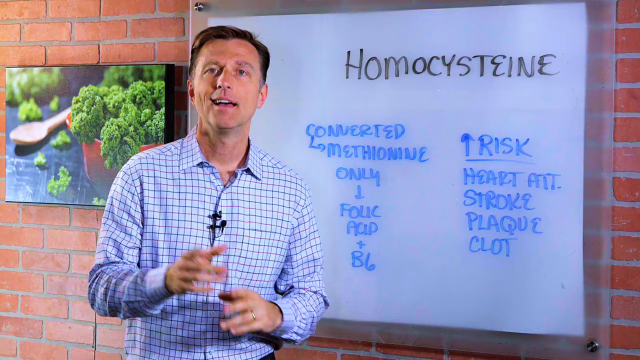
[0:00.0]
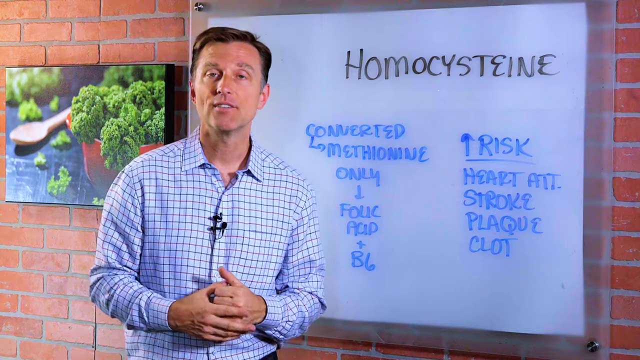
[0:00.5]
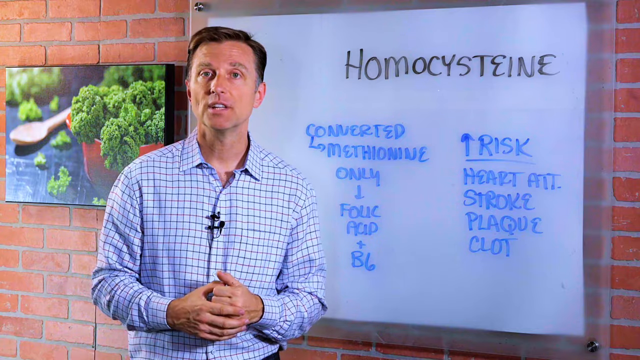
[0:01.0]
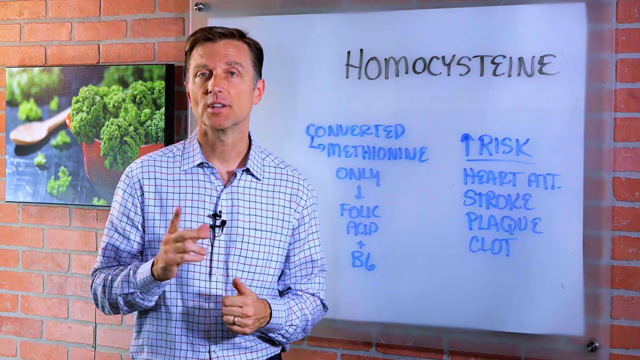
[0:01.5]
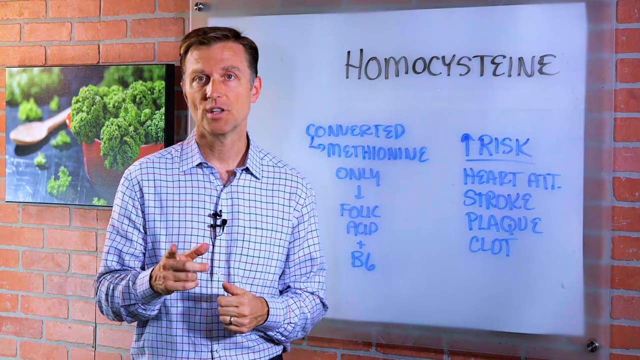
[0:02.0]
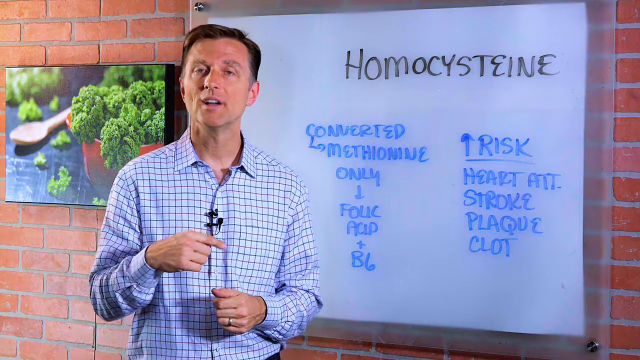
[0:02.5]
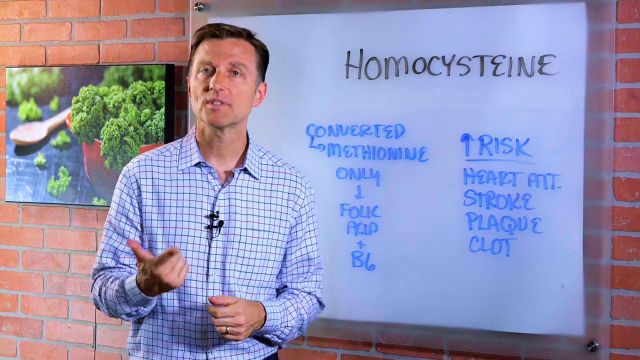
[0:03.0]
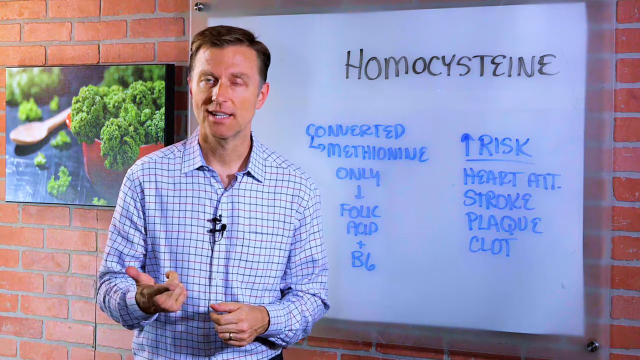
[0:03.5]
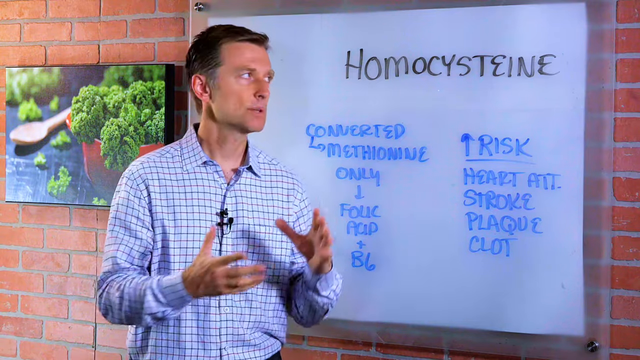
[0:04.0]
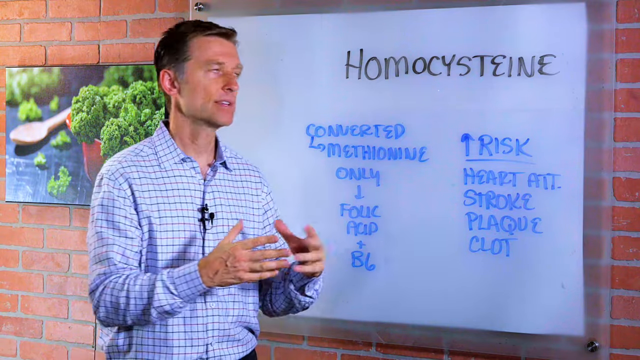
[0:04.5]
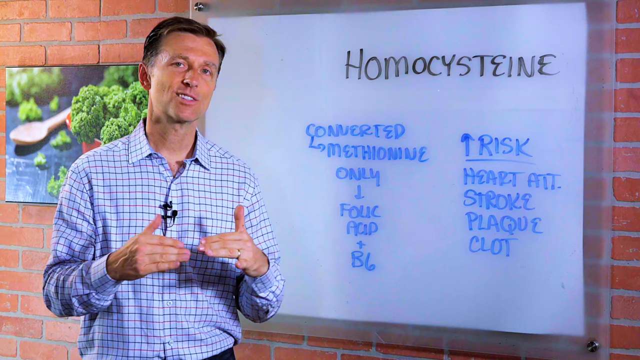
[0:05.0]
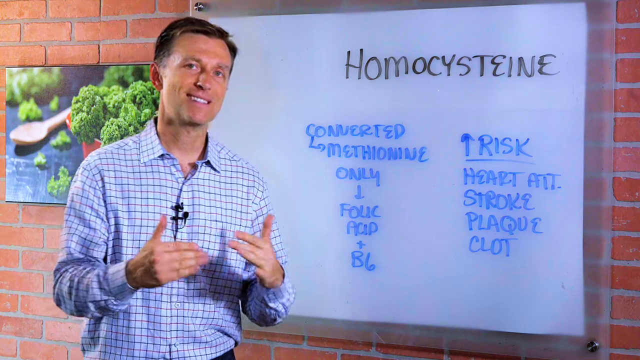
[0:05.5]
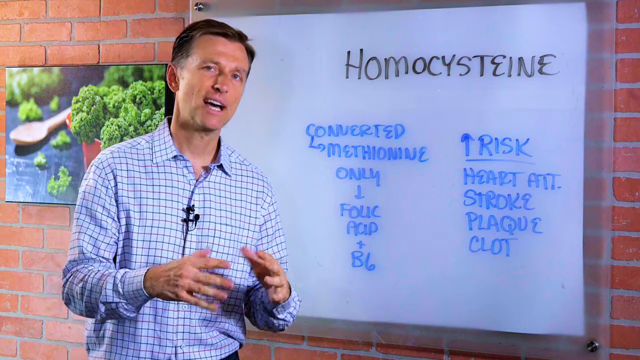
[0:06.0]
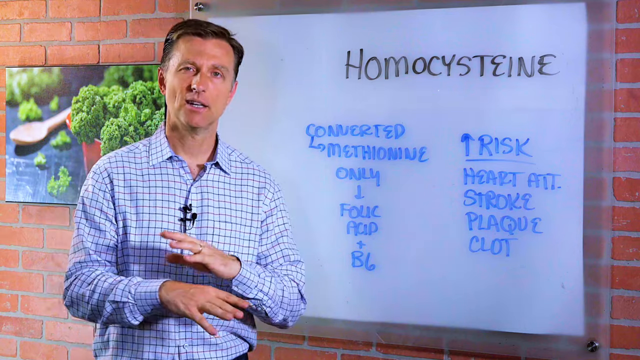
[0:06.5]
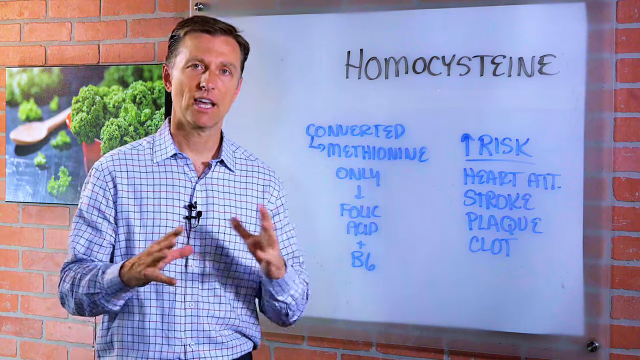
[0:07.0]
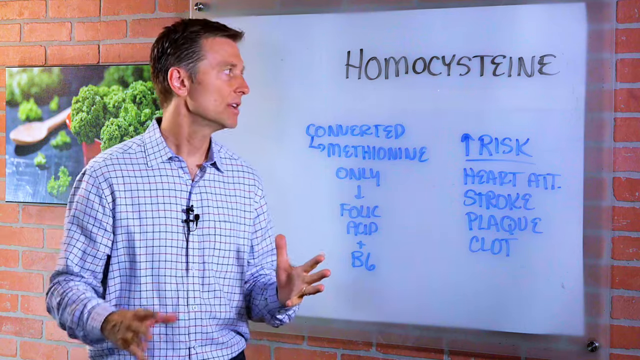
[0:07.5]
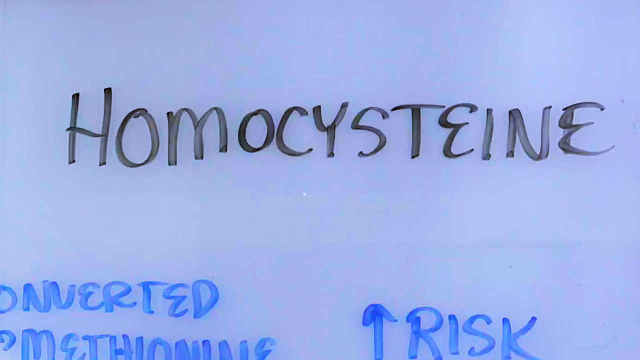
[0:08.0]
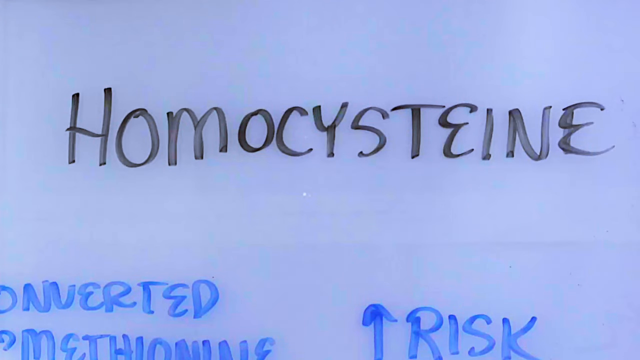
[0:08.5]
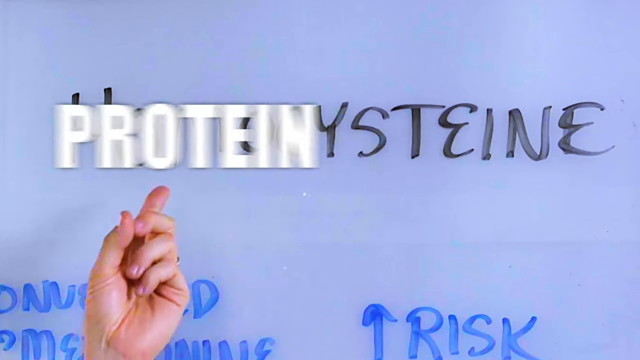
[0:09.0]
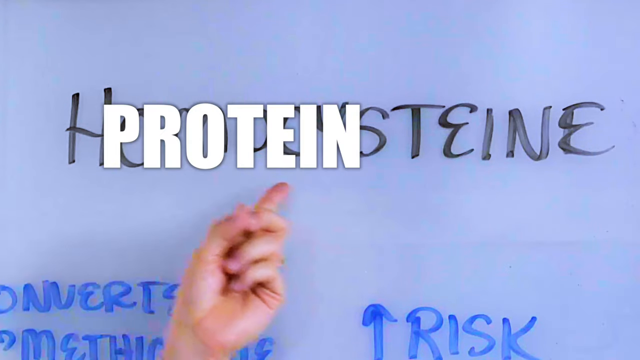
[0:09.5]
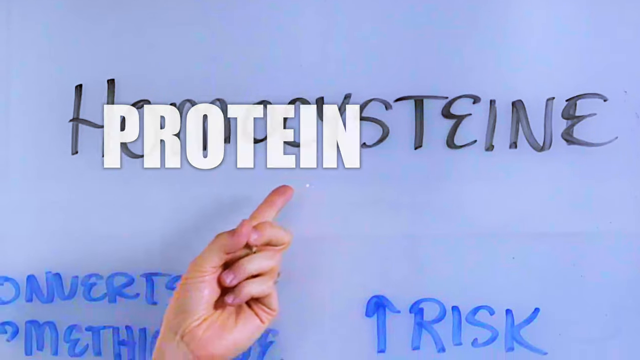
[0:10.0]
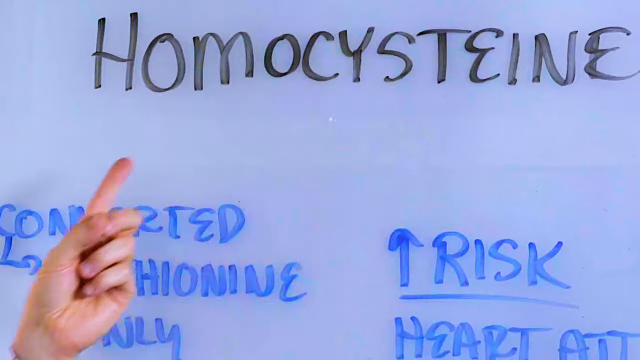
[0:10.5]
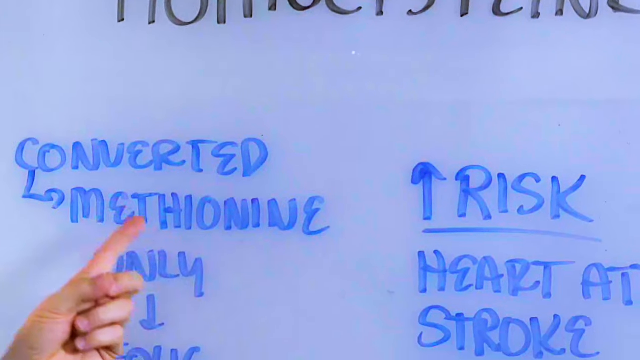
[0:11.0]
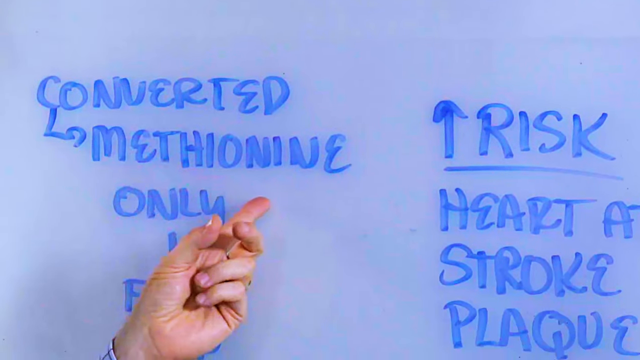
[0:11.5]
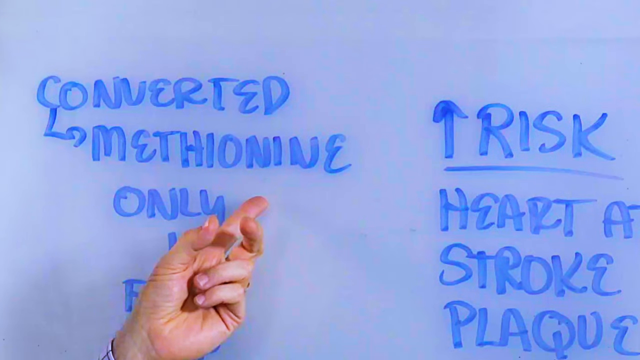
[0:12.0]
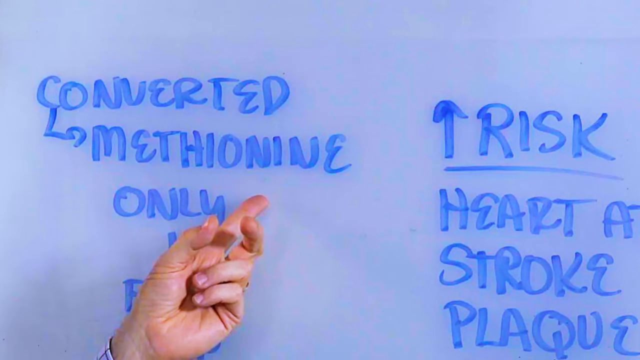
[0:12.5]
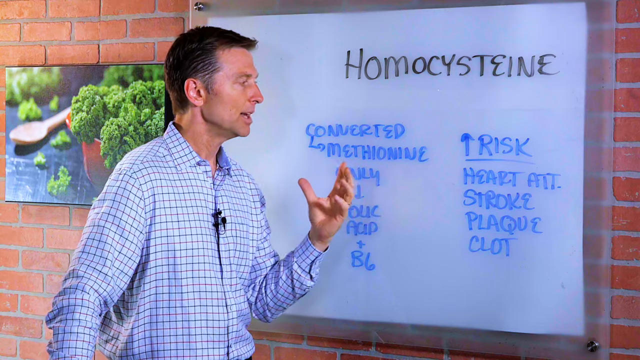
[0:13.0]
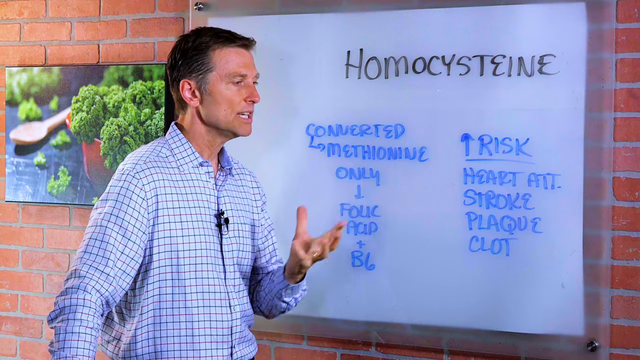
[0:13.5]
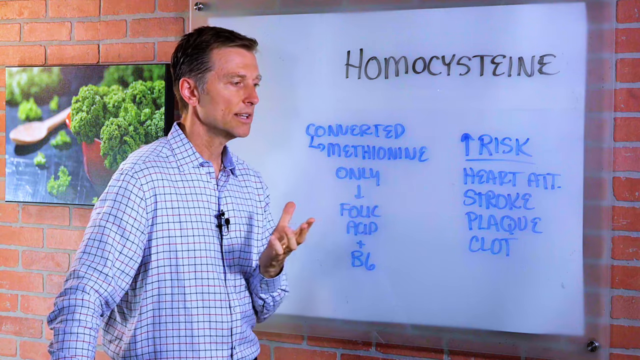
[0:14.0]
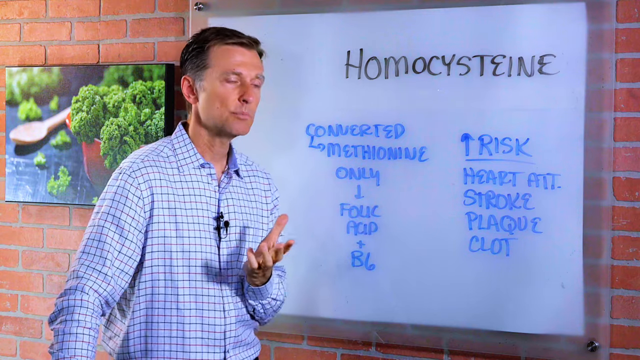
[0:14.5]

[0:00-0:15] The video begins with the title "What is homocysteine" displayed on the screen. A man with brown hair and a blue collared shirt stands in front of a whiteboard. The word "homocysteine" is written at the top of the whiteboard, with several related terms listed below it in blue text, such as "converted," "risk," "methionine only," "folic acid," "B6," "heart attack," "stroke," "plaque," and "clot." The man appears to begin explaining, looking towards the whiteboard. The camera cuts to a graphic with the word "protein" displayed. The man then points to the word "methionine" on the whiteboard.